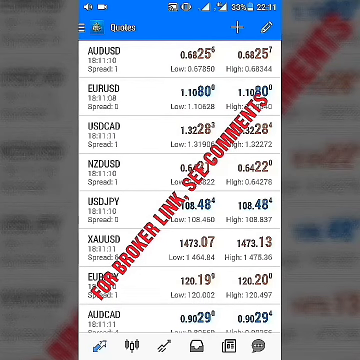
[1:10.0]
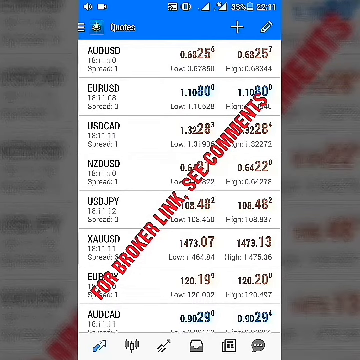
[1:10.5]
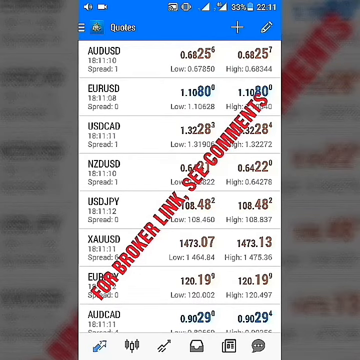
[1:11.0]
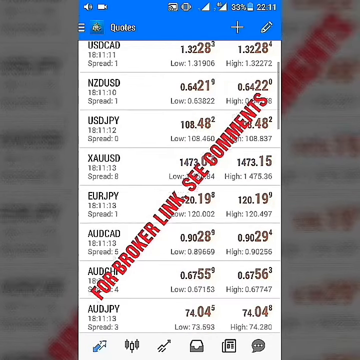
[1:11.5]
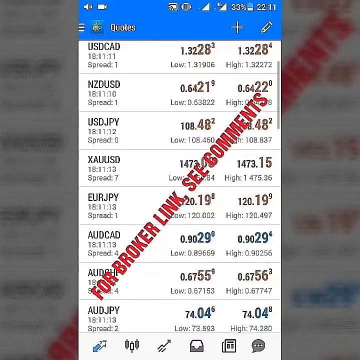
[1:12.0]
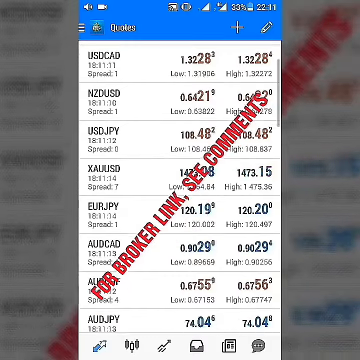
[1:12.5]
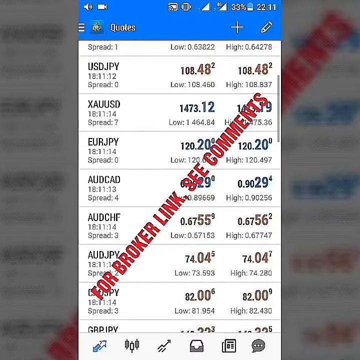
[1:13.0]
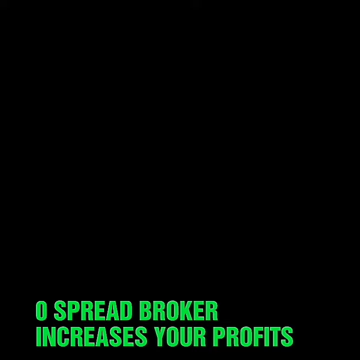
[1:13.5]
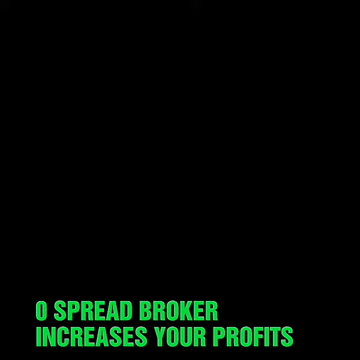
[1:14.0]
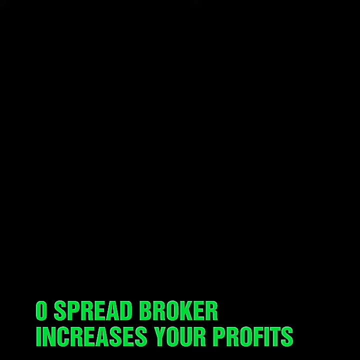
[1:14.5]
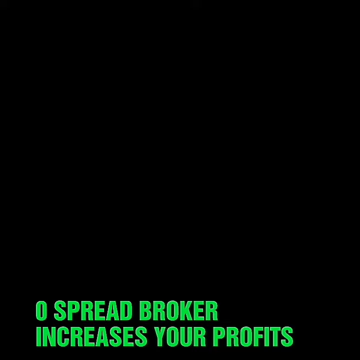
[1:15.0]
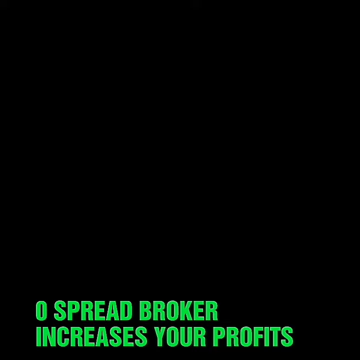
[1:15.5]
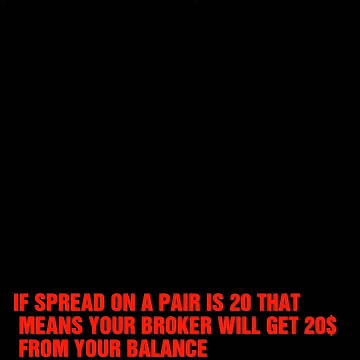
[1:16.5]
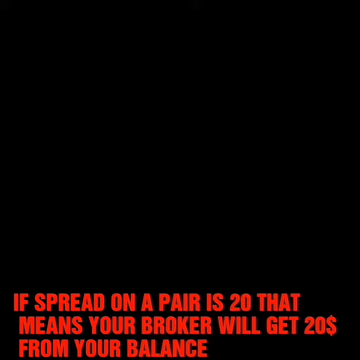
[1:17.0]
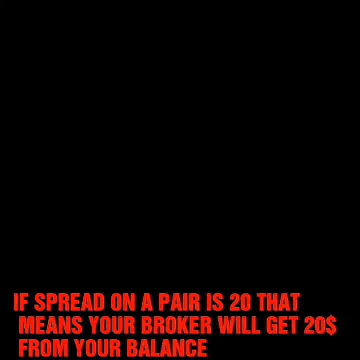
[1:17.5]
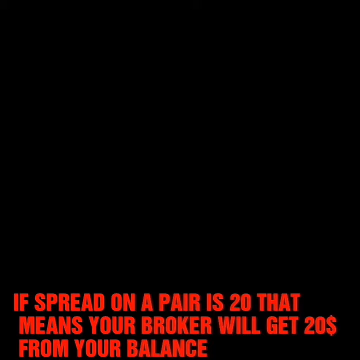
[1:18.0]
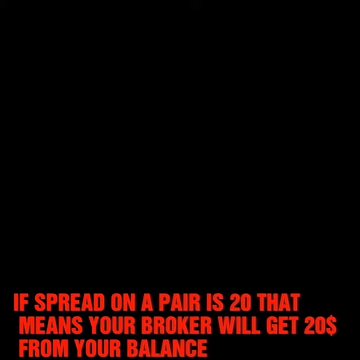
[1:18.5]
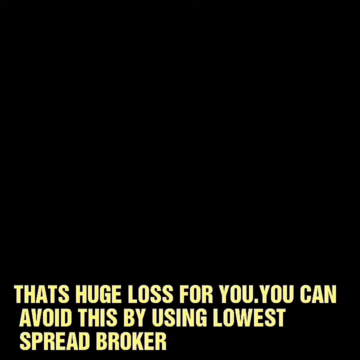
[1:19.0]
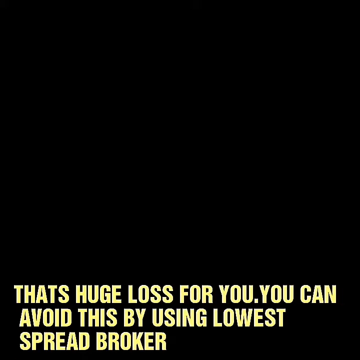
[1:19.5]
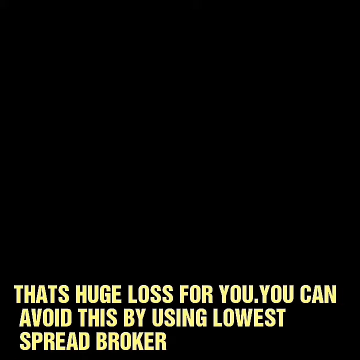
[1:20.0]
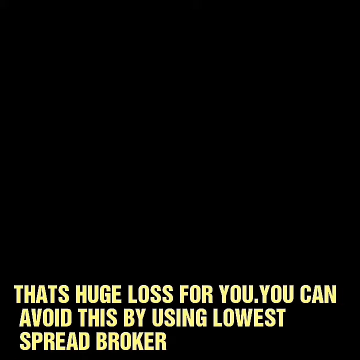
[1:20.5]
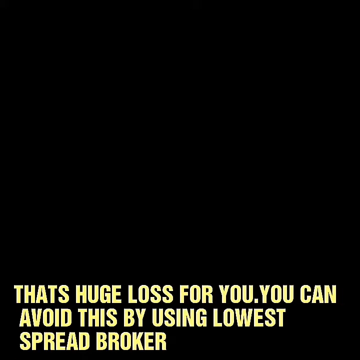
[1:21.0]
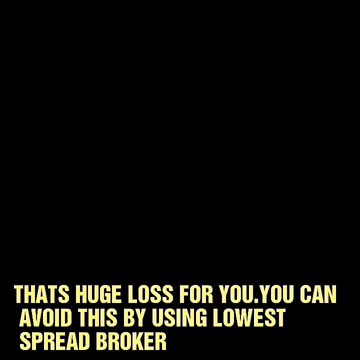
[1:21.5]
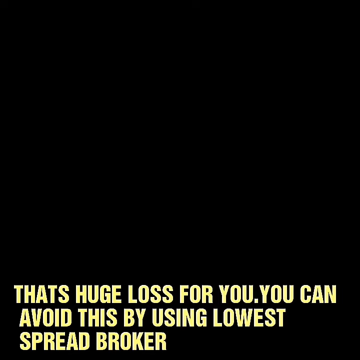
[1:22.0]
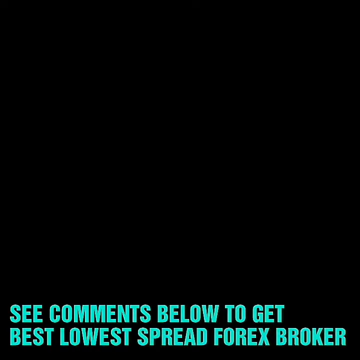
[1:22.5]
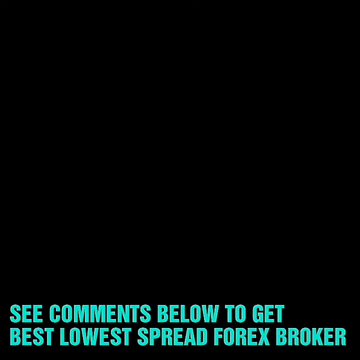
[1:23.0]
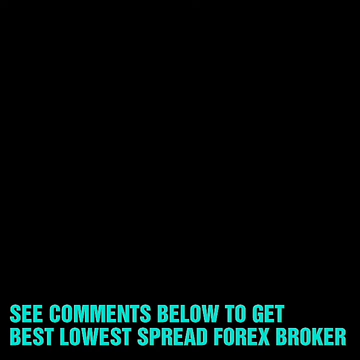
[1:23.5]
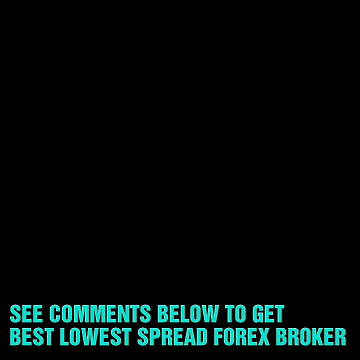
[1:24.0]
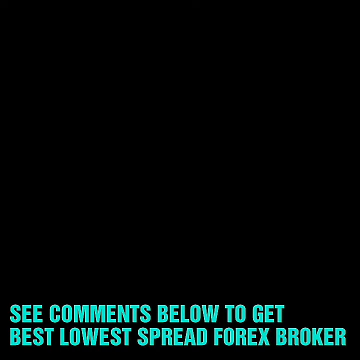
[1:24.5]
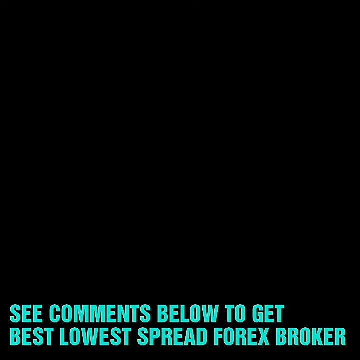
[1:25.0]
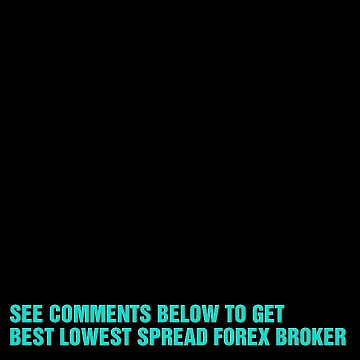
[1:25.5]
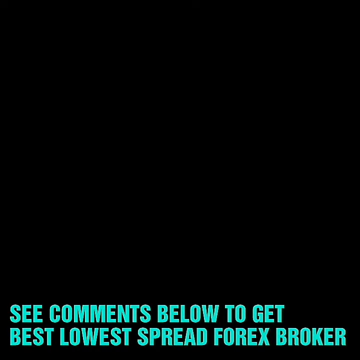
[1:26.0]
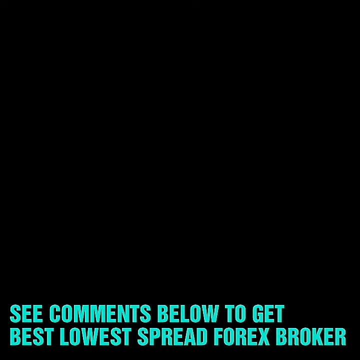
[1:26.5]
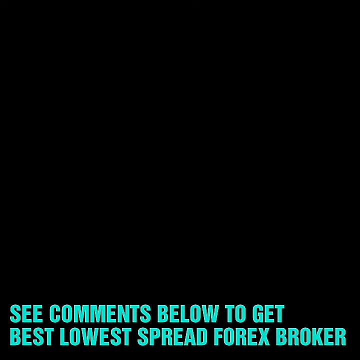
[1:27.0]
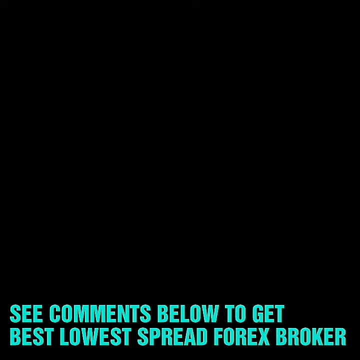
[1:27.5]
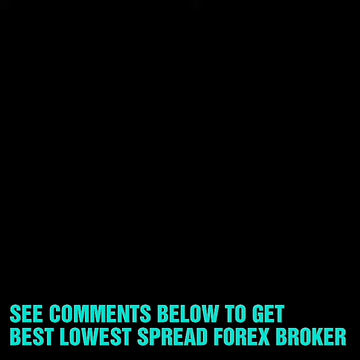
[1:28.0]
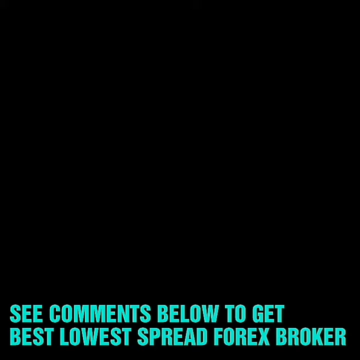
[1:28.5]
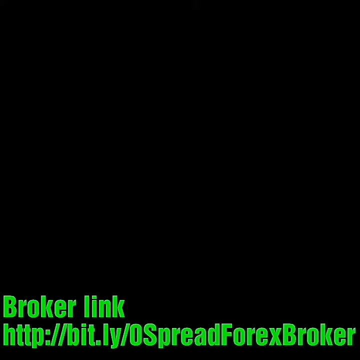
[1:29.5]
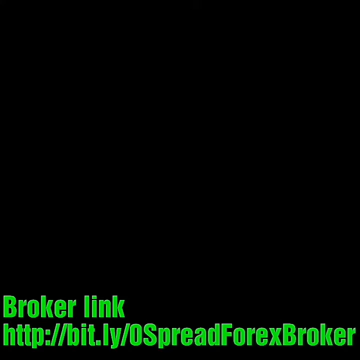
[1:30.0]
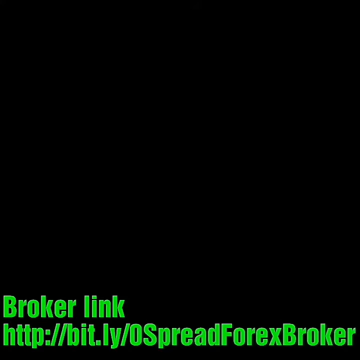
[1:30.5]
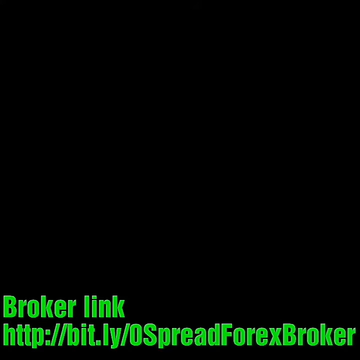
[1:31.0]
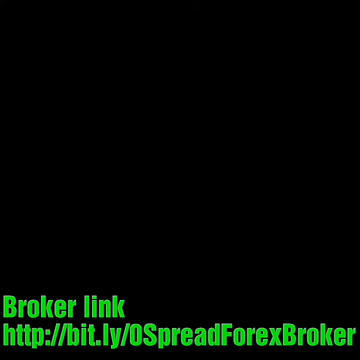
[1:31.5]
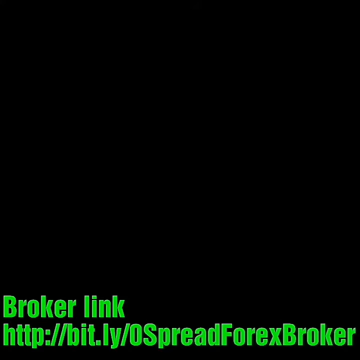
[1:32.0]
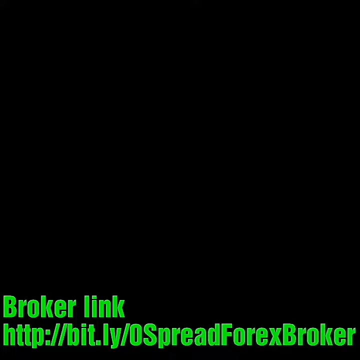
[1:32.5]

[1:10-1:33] Financial information appears on a screen in the center, with a gray background on the left and right sides. A blue banner on top reads "quotes" and shows the battery and the time, 2211. Against the white background below, the lines include USD CAD with a spread of 1 and XAU USD with a spread of 6, a low of 1473.07 and a high of 1473.13. Red block letters running diagonally from the lower left to the upper right read "for broker link see comments". After scrolling, the scene changes to text that says "if that's a huge loss for you you can avoid this by using lowest spread broker". Another message reads "zero spread broker increases your profits" and "if spread on a pair is 20 that means your broker will get $20". Blue text against a black background then says "see comments below to get the lowest spread Forex broker", and a broker link is shown in bold green text.